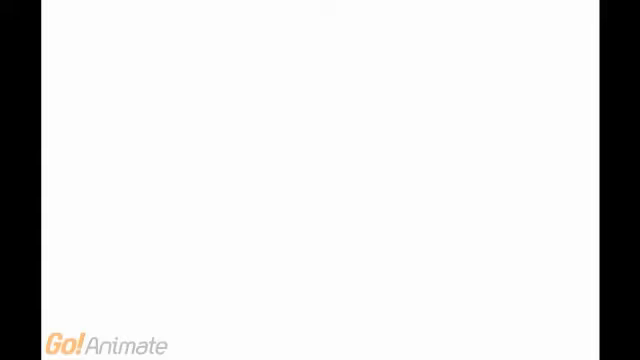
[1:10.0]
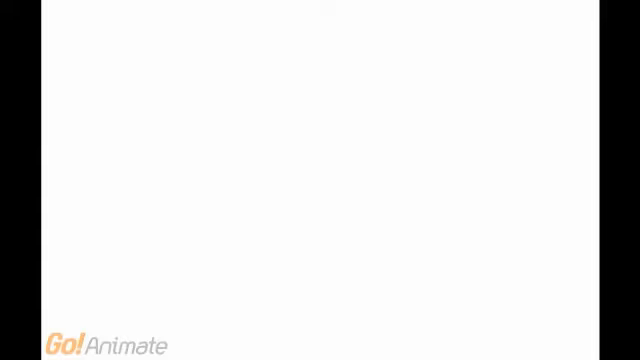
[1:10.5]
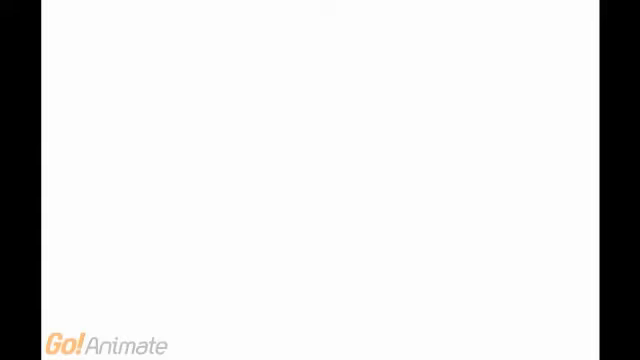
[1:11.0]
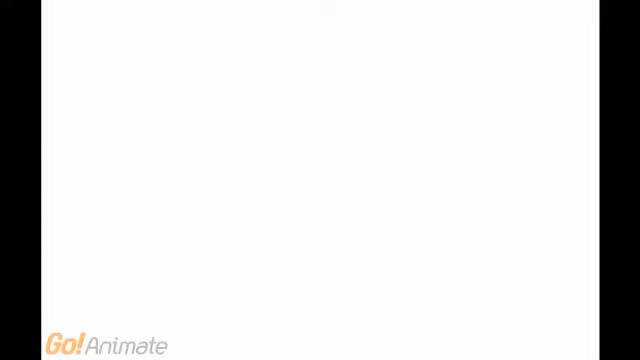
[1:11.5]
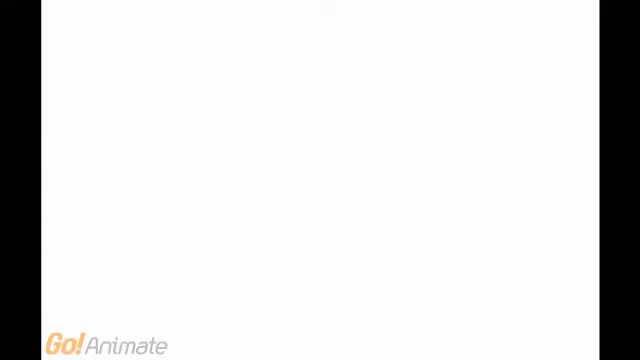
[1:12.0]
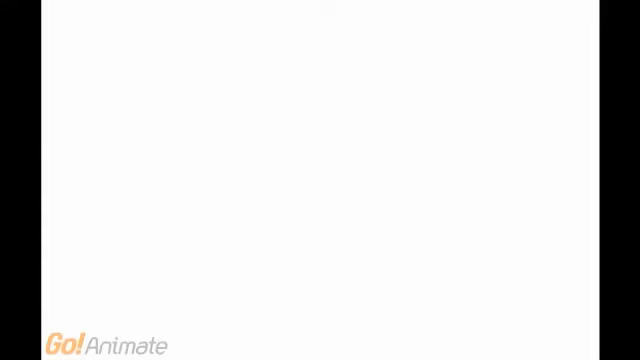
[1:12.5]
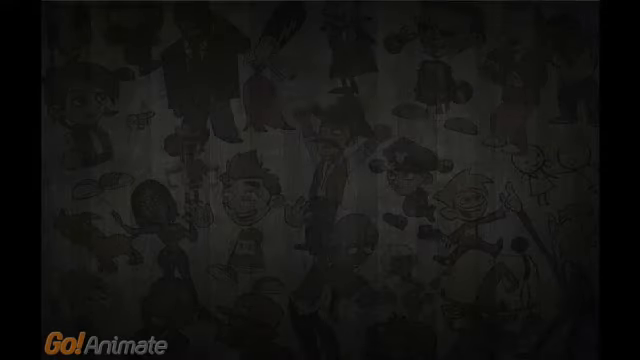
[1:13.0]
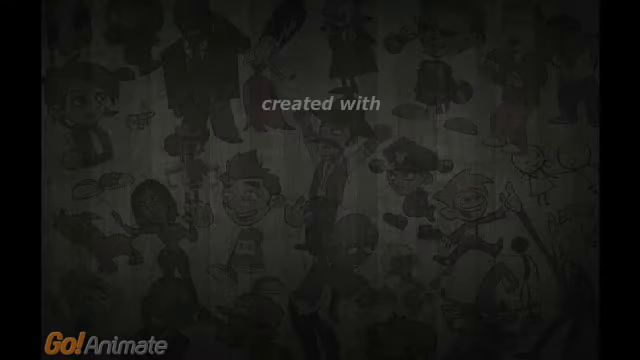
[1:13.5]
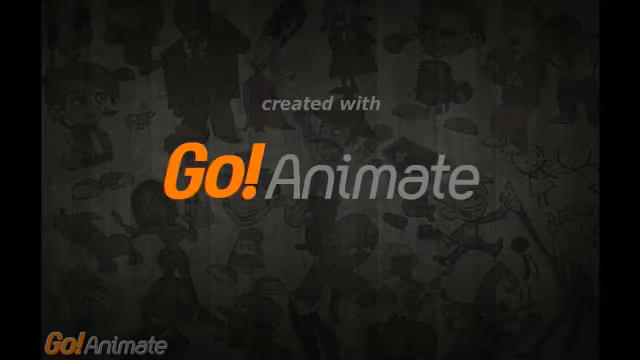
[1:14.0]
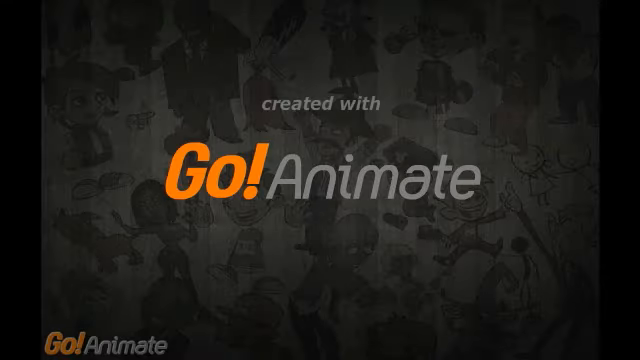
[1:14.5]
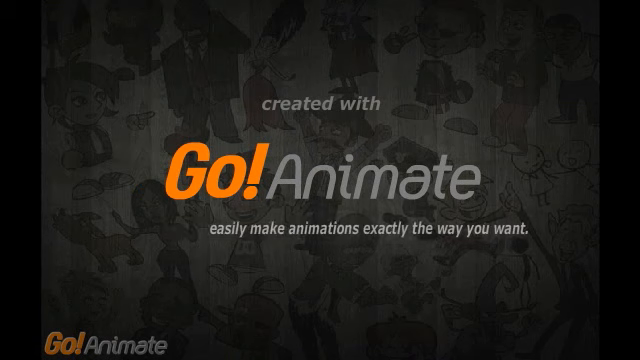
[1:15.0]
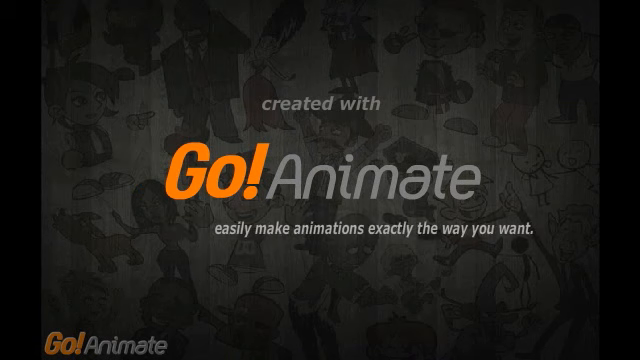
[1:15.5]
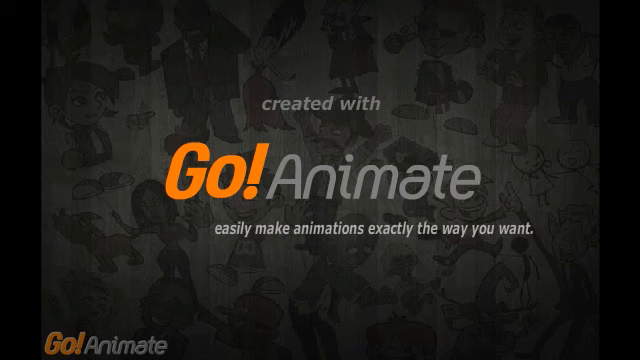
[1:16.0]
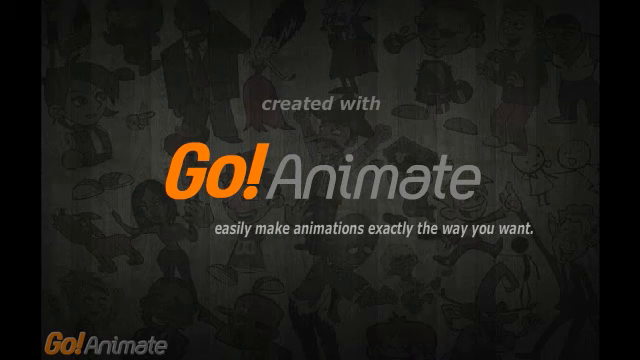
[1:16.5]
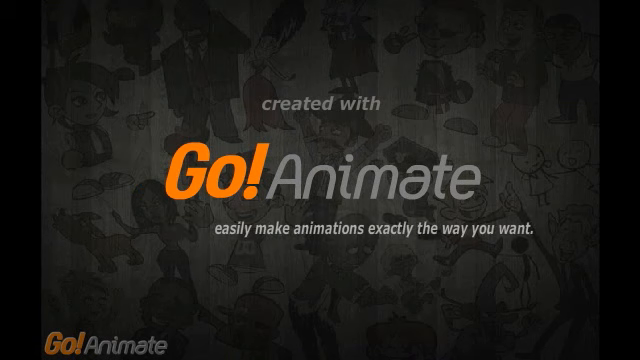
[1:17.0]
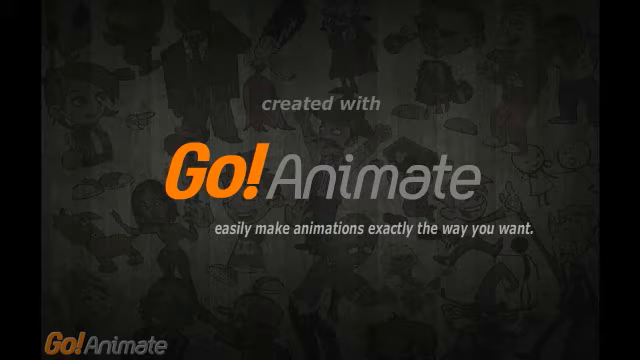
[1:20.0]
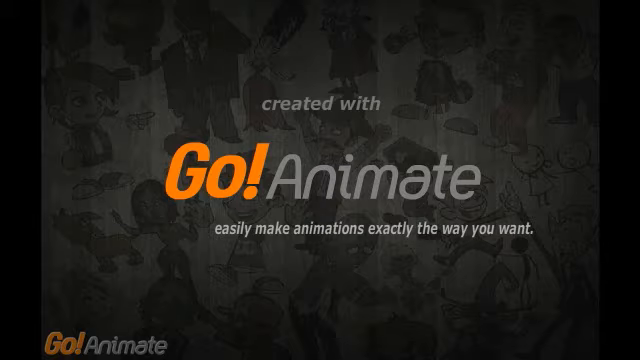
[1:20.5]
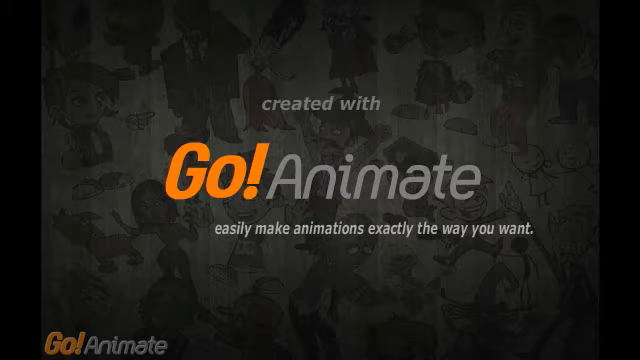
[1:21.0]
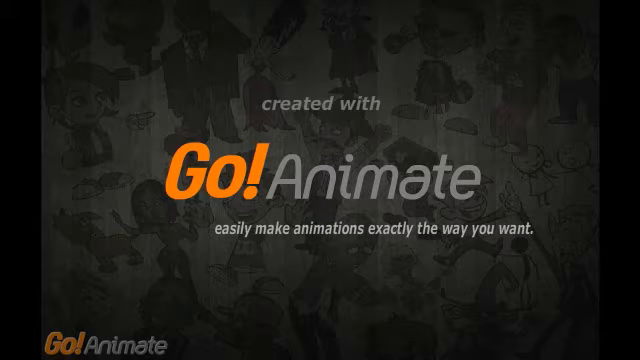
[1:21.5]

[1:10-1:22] The animation ends with the GoAnimate logo and a line about making animations exactly the way you want.